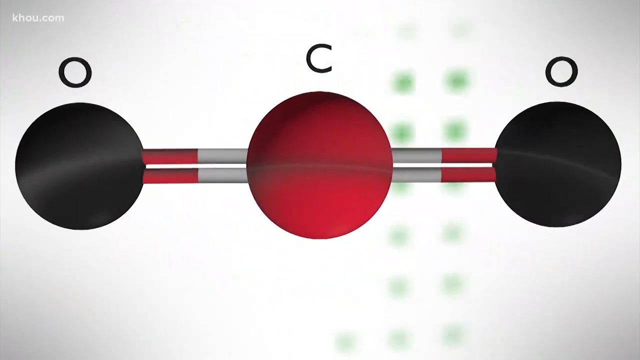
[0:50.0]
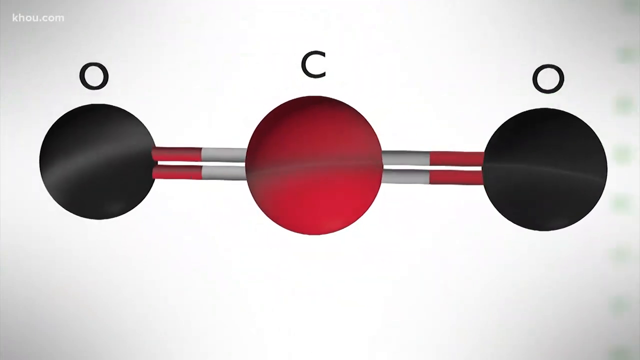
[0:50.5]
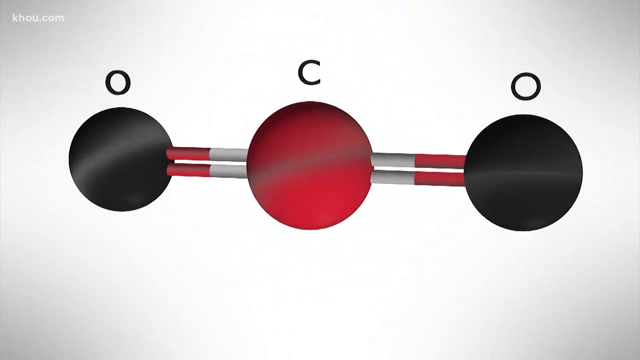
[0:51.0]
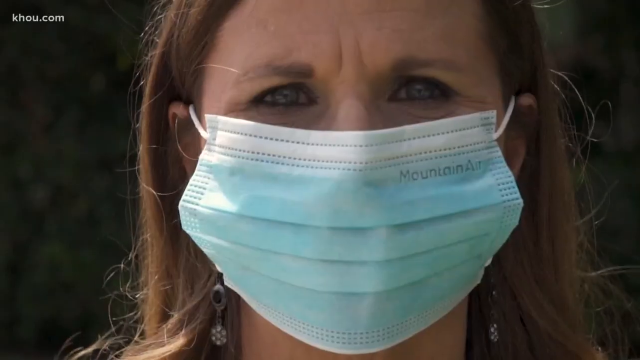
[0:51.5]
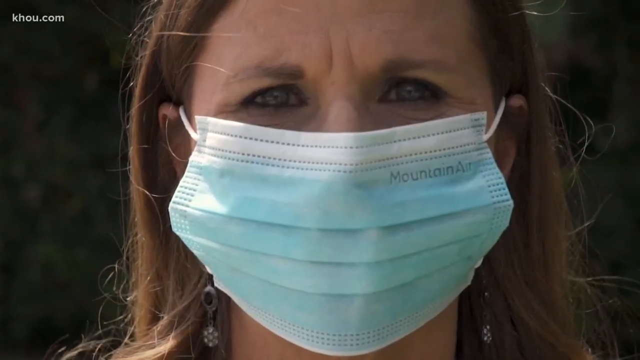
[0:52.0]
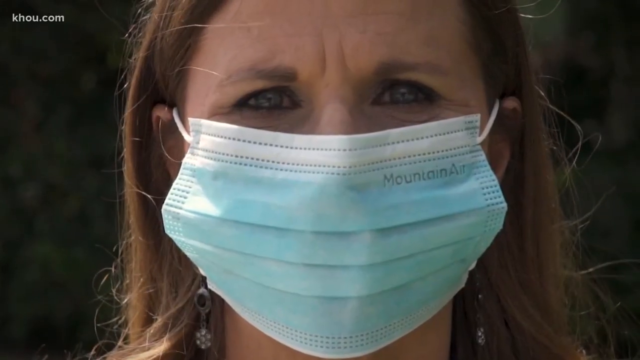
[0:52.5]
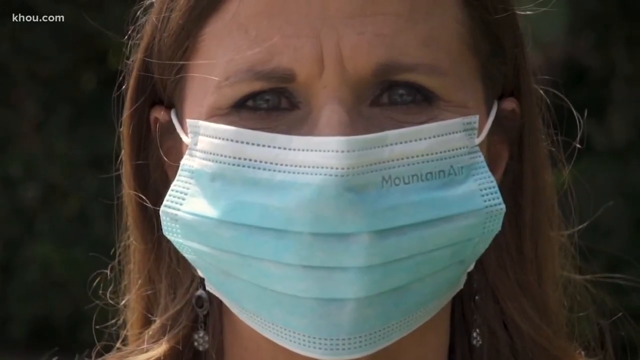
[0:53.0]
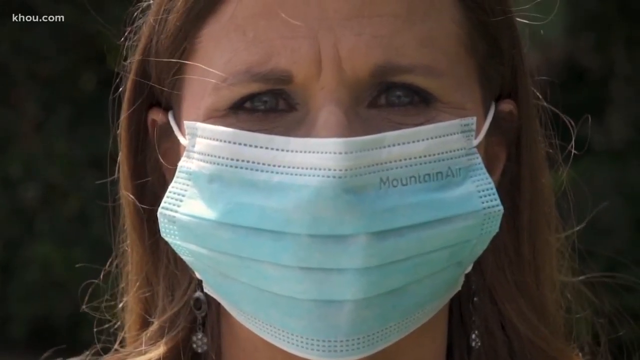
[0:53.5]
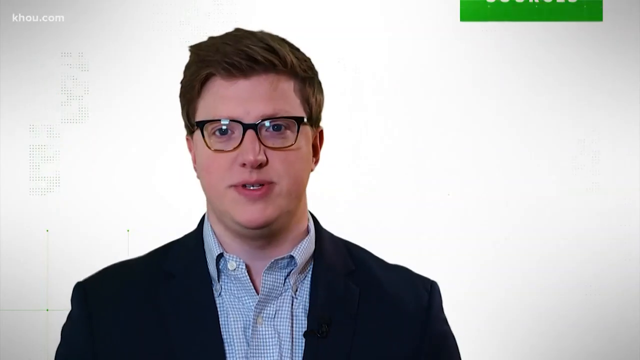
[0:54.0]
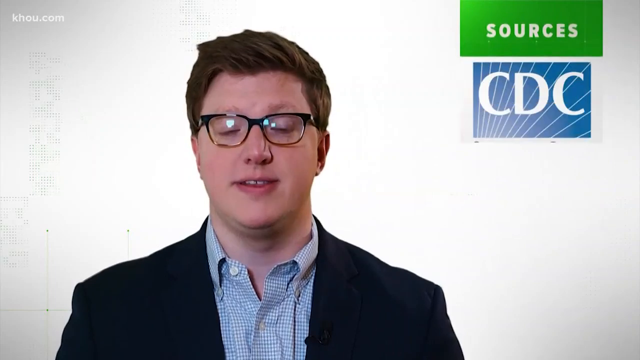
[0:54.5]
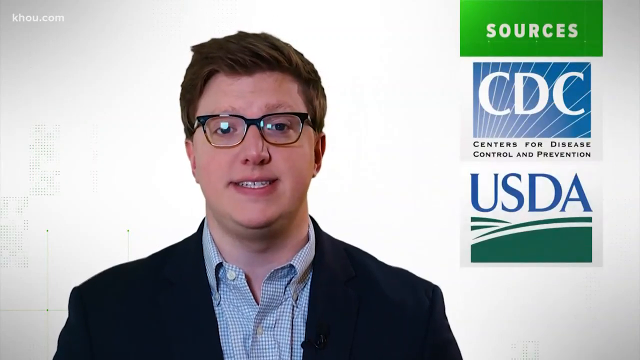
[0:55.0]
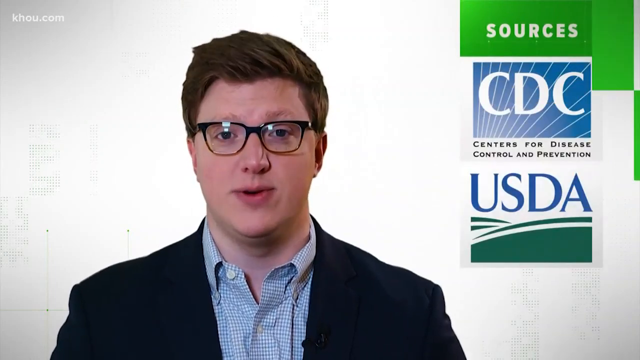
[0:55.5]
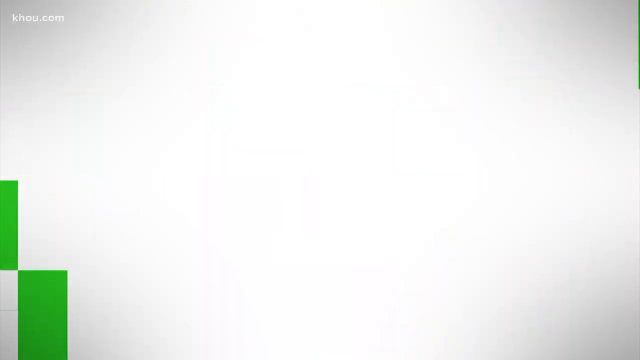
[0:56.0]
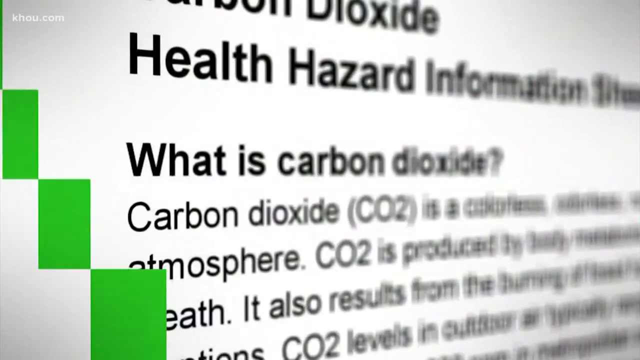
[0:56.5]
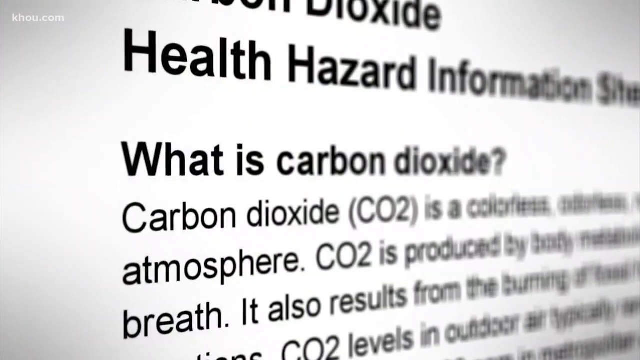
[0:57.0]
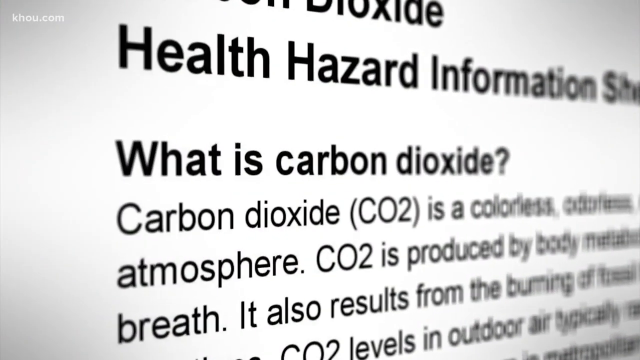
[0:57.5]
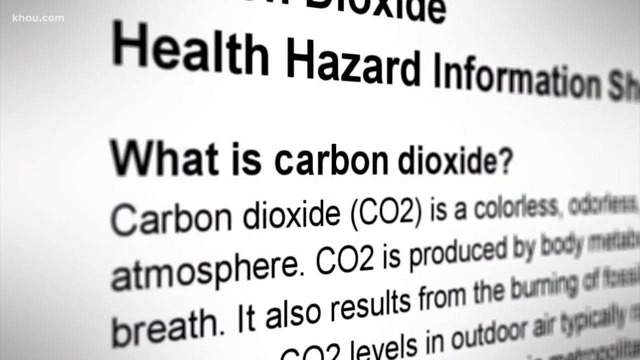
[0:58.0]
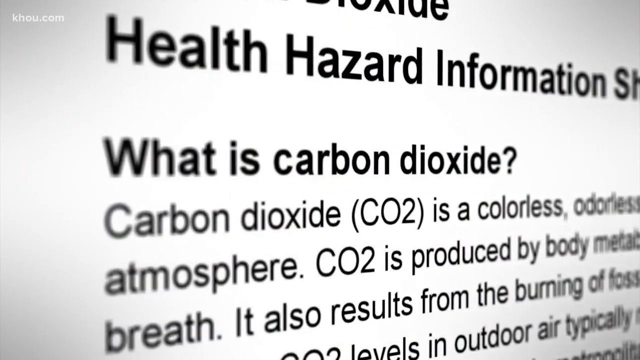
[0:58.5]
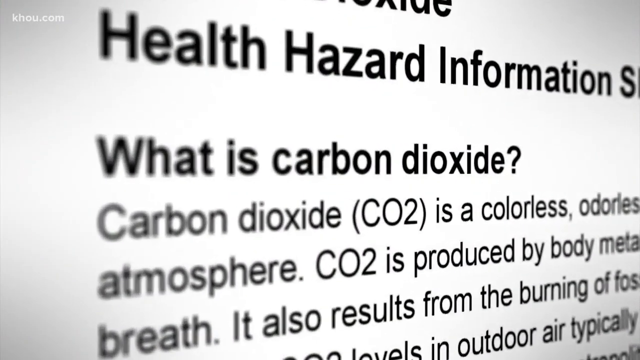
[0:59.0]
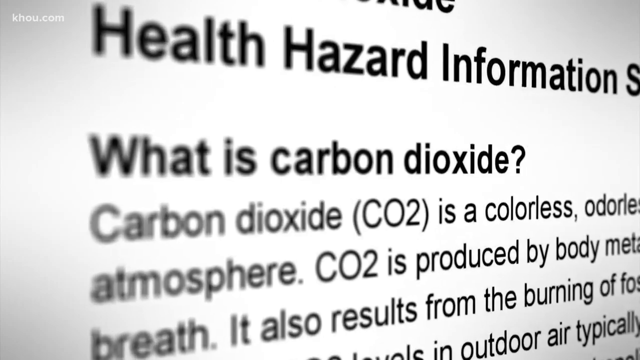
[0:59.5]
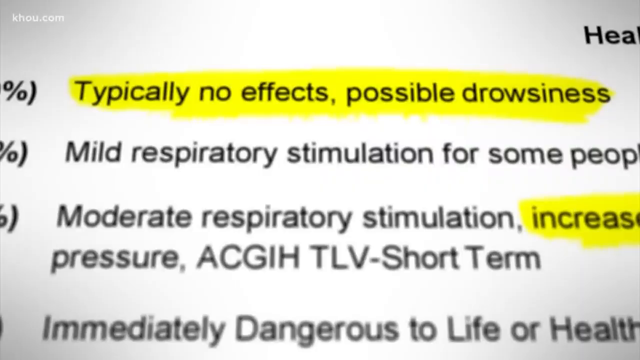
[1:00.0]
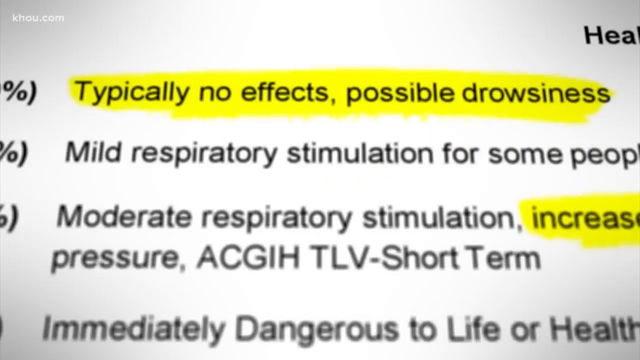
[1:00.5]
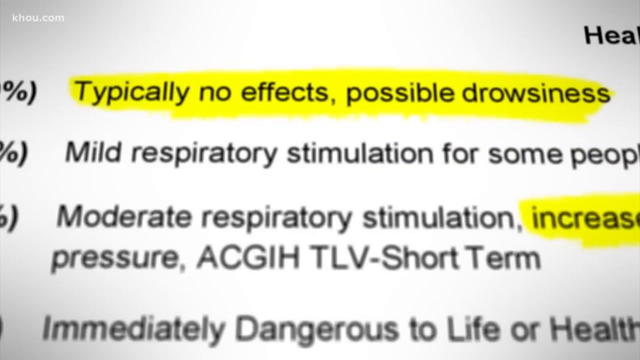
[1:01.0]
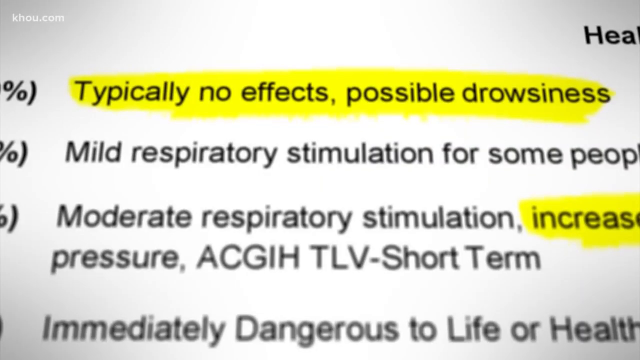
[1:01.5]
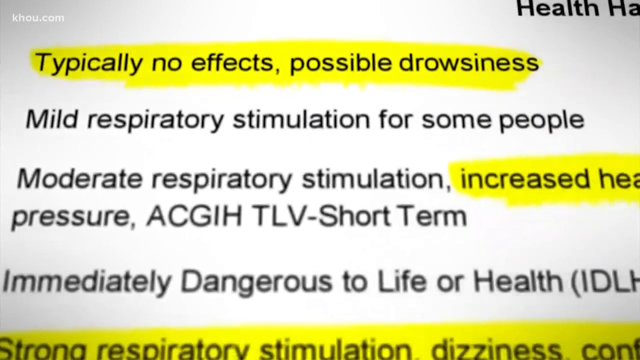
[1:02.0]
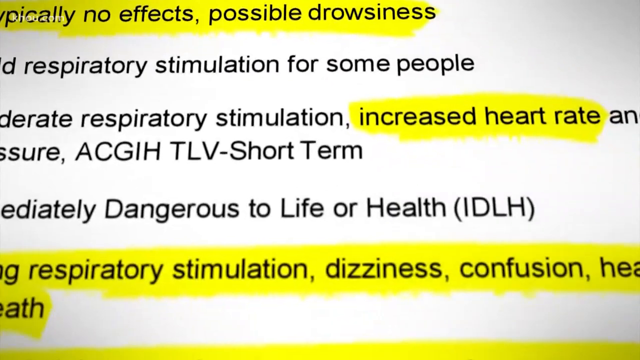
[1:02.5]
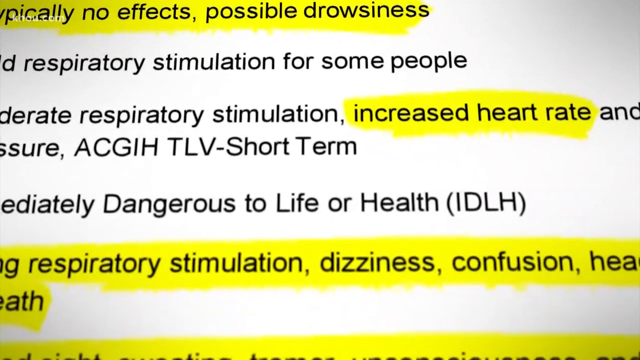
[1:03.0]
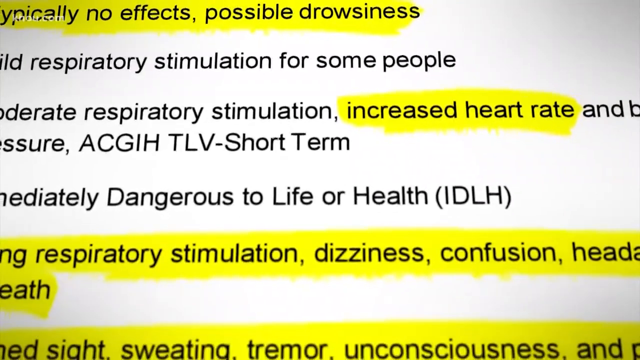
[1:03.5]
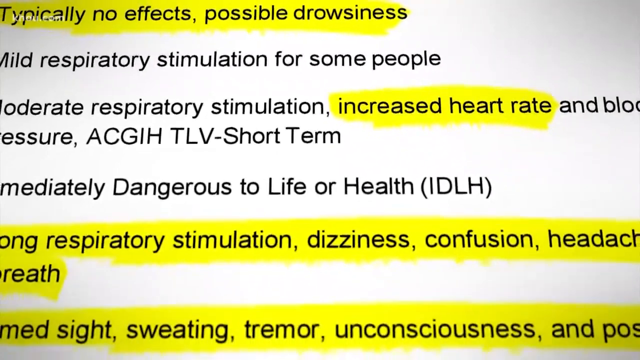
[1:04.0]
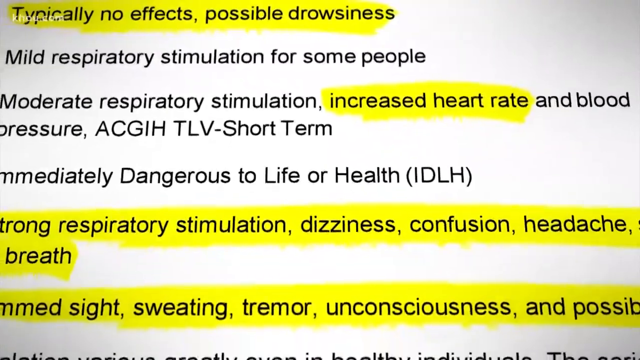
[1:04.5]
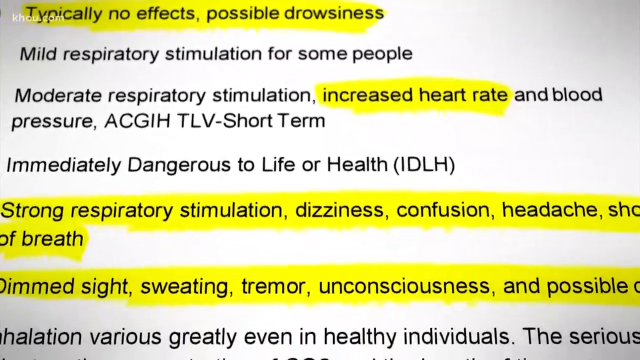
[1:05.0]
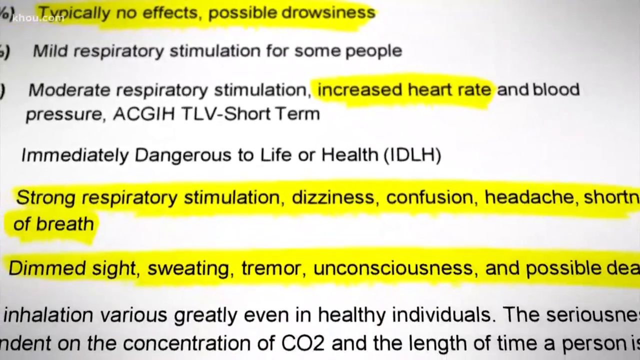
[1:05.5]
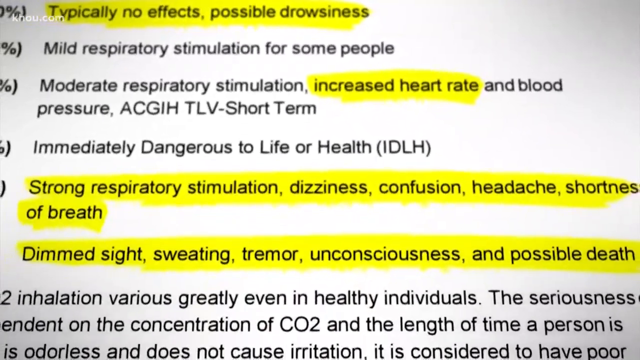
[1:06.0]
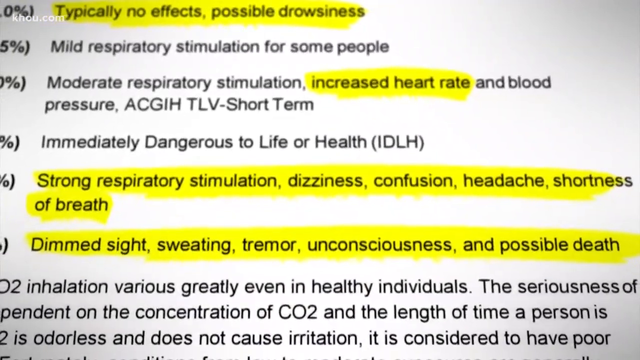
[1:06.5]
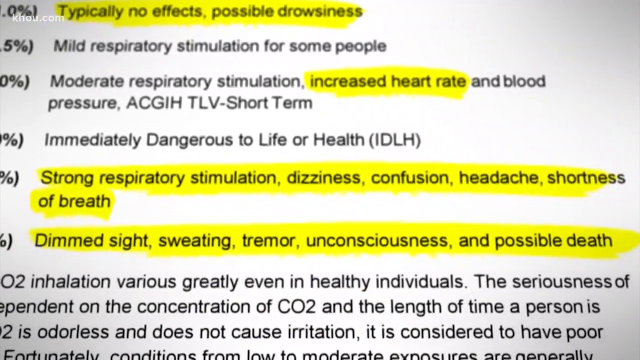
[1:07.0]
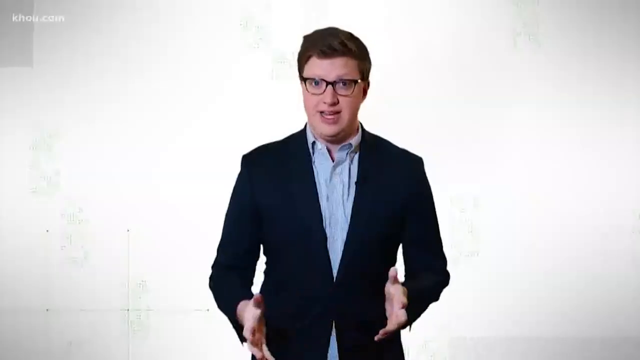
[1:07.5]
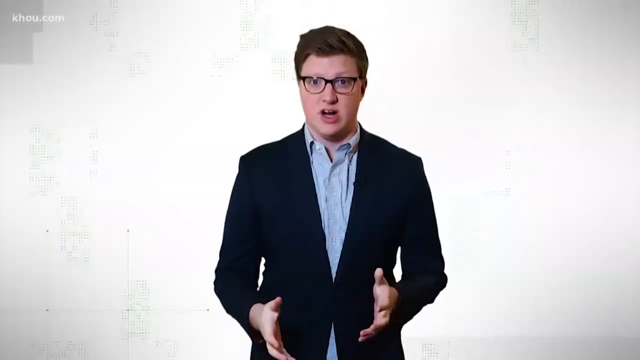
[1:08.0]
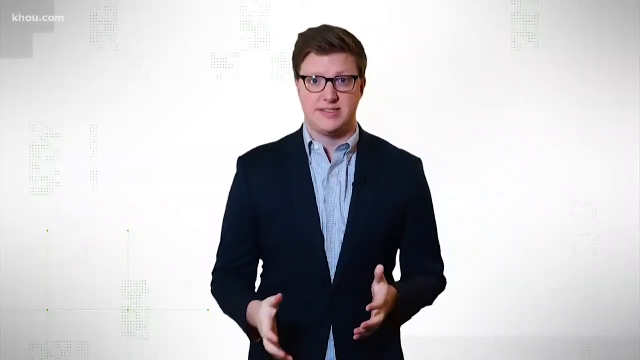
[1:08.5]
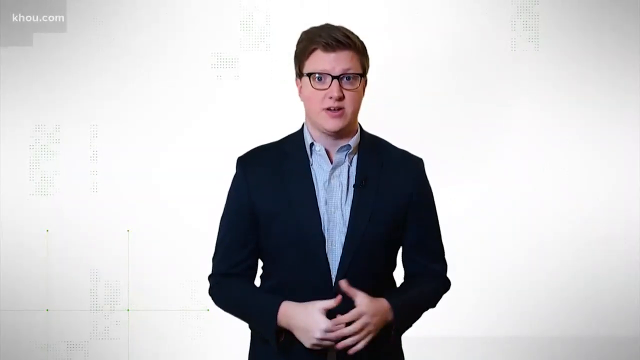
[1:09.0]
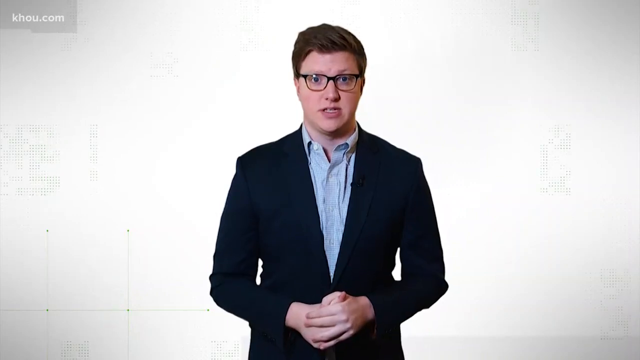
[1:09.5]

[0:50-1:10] An illustration on the screen shows a large red sphere in the middle, with sticks coming out of the left-hand and right-hand sides, four sticks altogether. They are white and red, with the white half touching the red ball and the red half touching two black balls at each end. Above the two black balls is the letter O, and above the red ball is the letter C. The illustration zooms out, and a quite zoomed-in shot shows a woman wearing a mask looking directly into the camera. The video cuts to the presenter with the glasses speaking at the camera. The camera then moves off the screen to a zoomed-in health hazard information sheet about what carbon dioxide is, which zooms in slowly. The screen then cuts to highlighted text that says things such as "typically no effects, possible drowsiness, increased heart rate, stimulation, dizziness, confusion, headaches", and the presenter appears back on the screen.